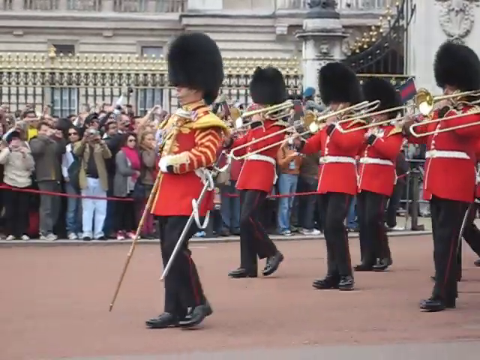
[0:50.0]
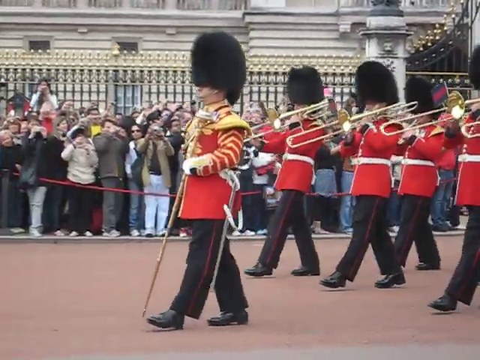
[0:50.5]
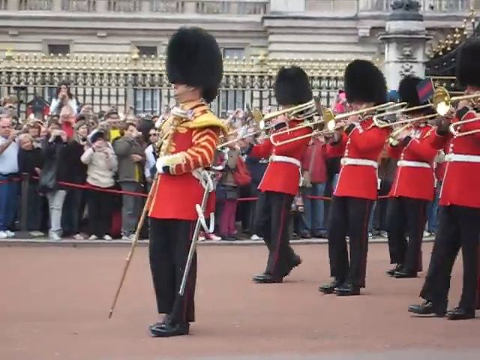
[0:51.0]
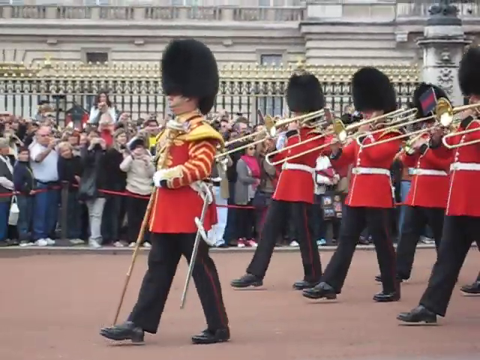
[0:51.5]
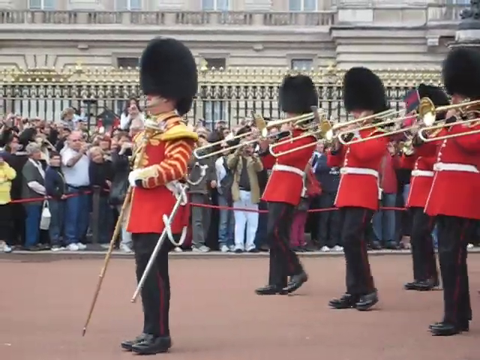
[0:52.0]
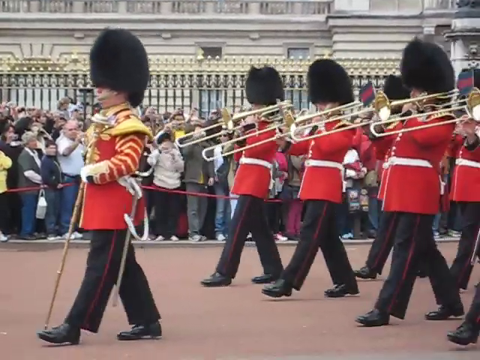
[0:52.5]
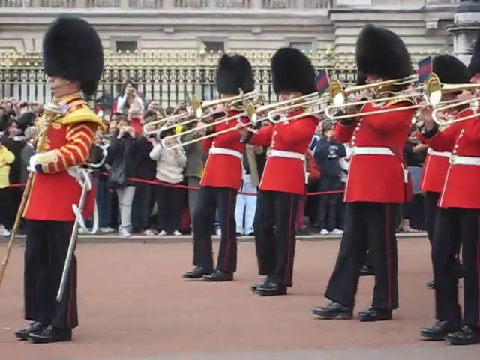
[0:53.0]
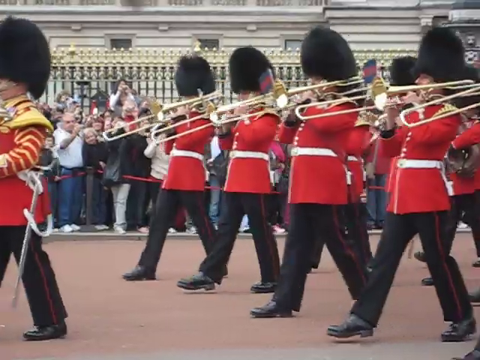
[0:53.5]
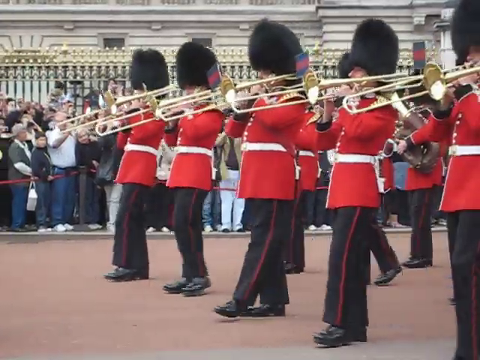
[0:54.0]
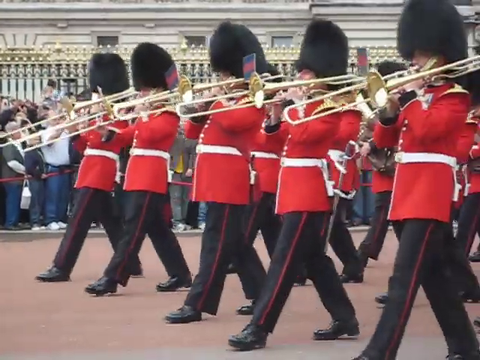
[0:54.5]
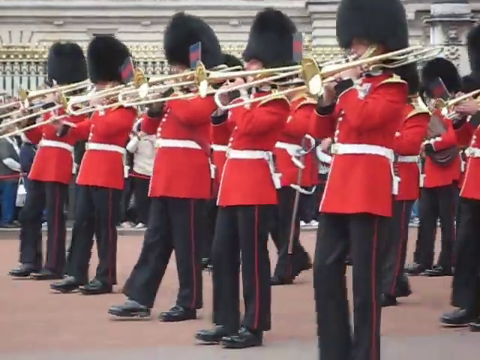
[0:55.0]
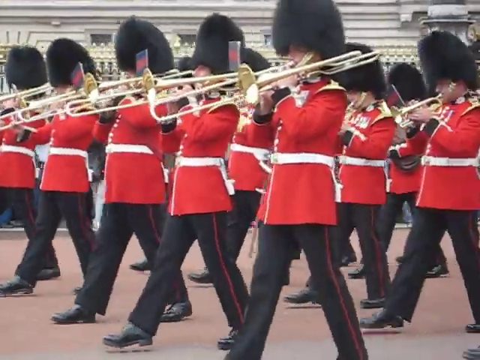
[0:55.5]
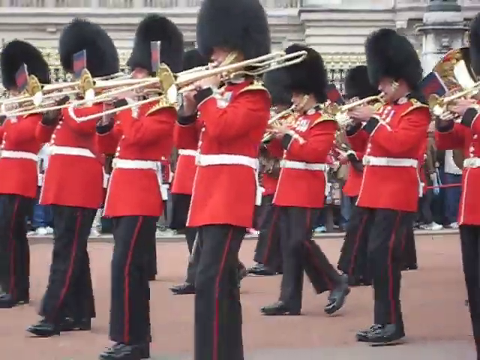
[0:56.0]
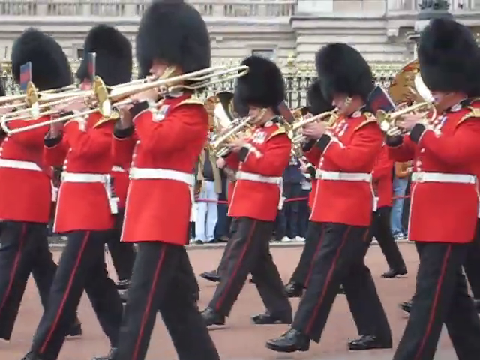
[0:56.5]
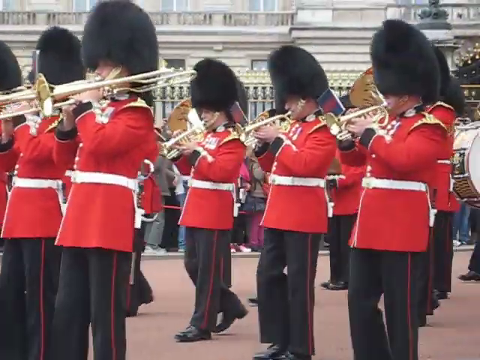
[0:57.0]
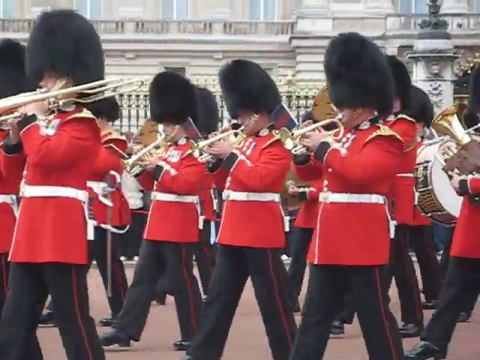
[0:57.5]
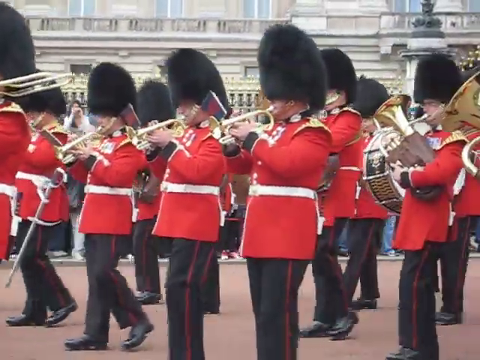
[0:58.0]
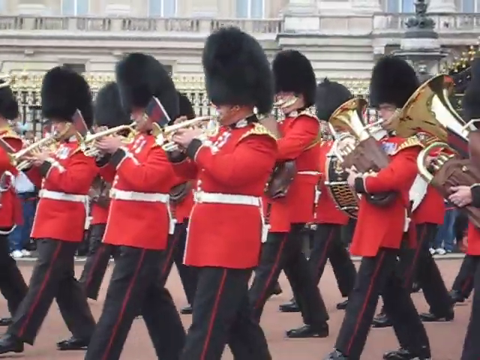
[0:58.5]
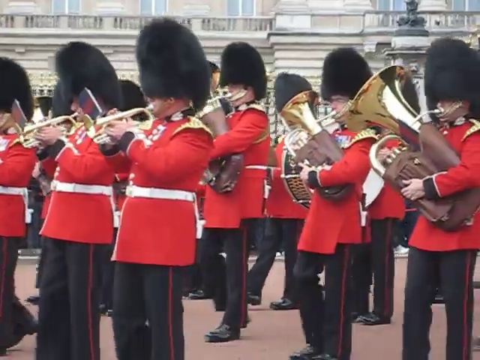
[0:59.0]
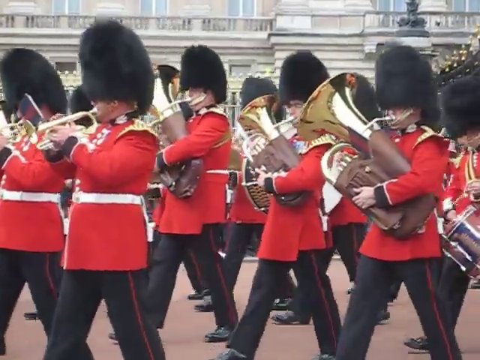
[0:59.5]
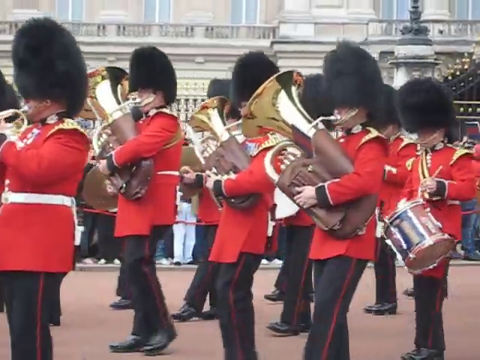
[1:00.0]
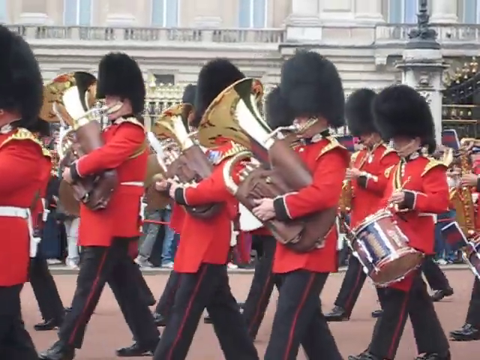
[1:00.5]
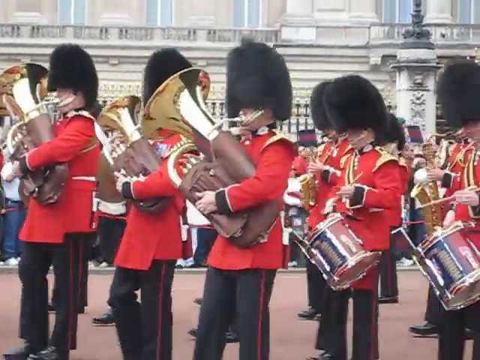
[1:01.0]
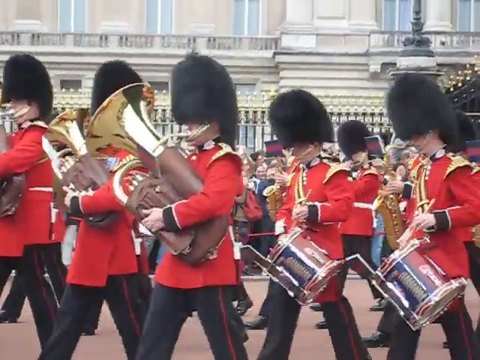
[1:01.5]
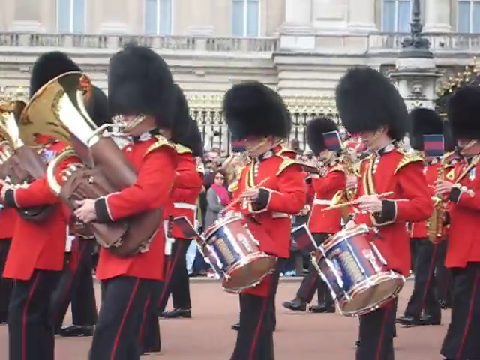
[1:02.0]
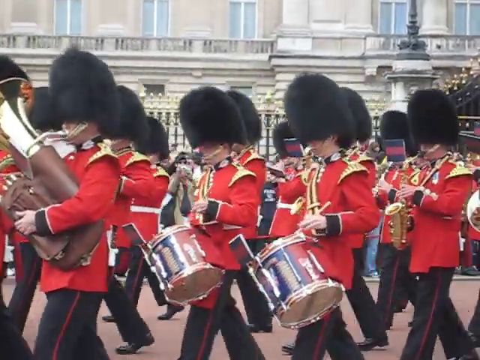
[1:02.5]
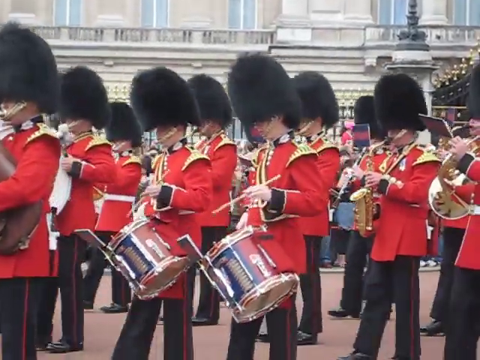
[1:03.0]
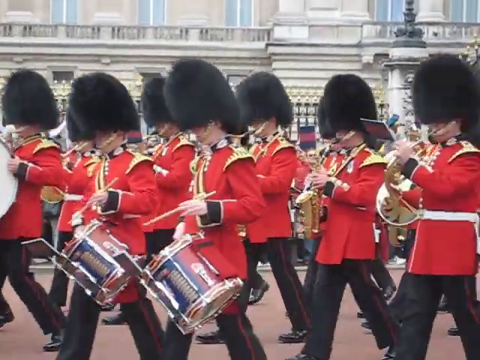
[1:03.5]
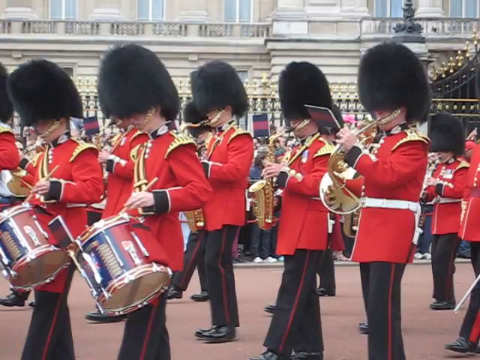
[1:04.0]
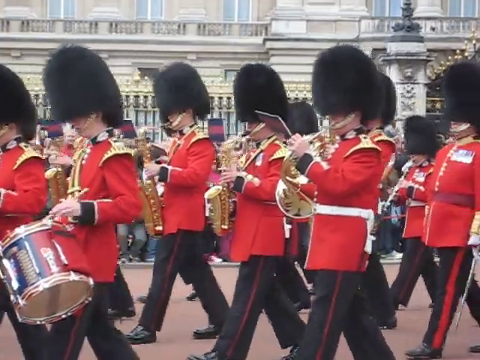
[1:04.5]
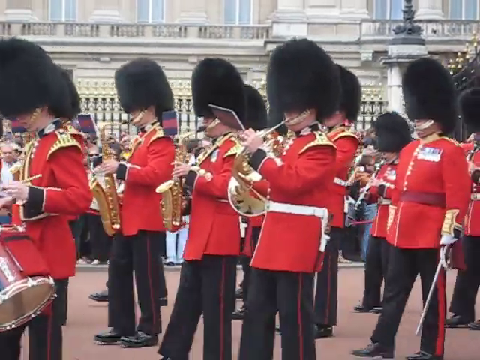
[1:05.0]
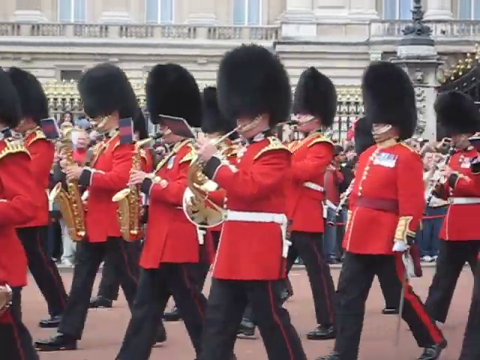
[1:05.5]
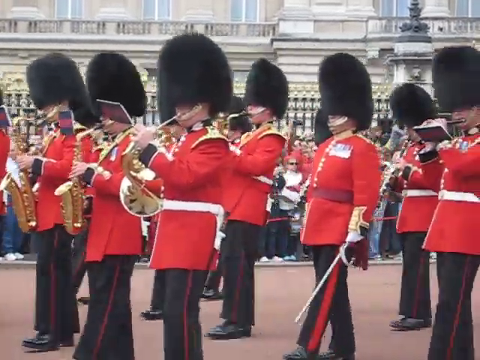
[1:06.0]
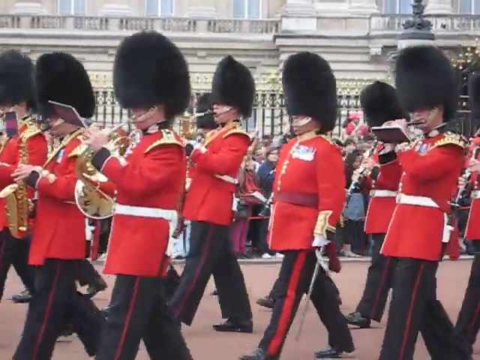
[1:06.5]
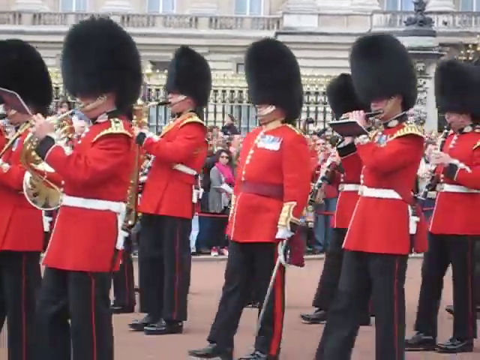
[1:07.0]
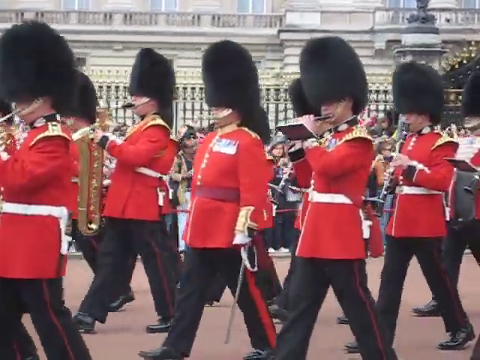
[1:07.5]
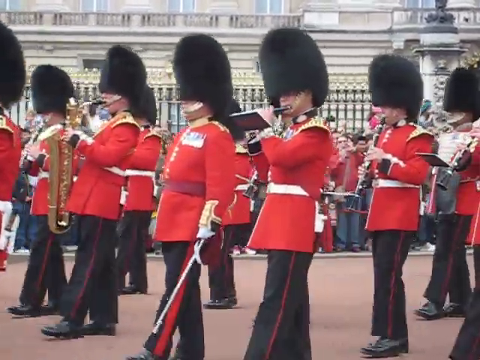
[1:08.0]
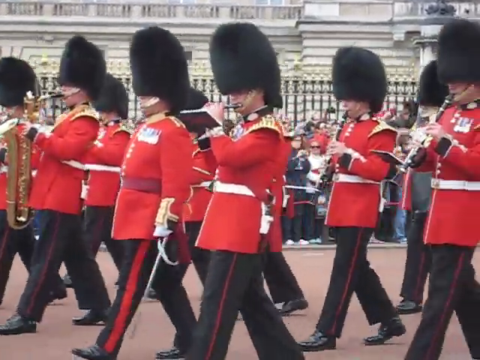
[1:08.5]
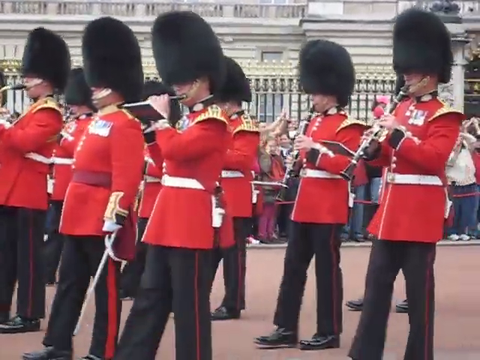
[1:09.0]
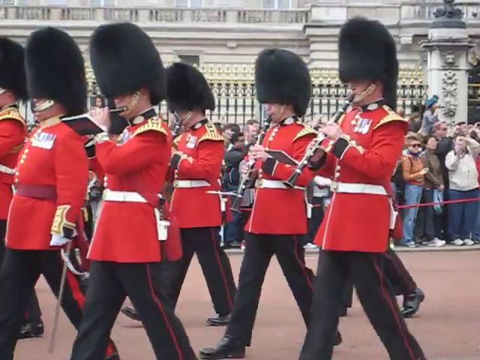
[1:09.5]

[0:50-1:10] A portion of Buckingham Palace is in the background, and in front of the palace is the tall fence around it. All along the fence, glimpses of a large group of tourists can be seen lining the road right next to the fence, standing on the sidewalk. The Queen's Guard members, all playing instruments, march very slowly in unison down the street as the tourists watch. They all wear the same uniforms with tall black fur hats, red blazers, black slacks and black boots, and they play a variety of instruments such as trombones, tubas, trumpets and drums. Many of the watching tourists hold cameras and cell phones in their hands as they record the guard members.